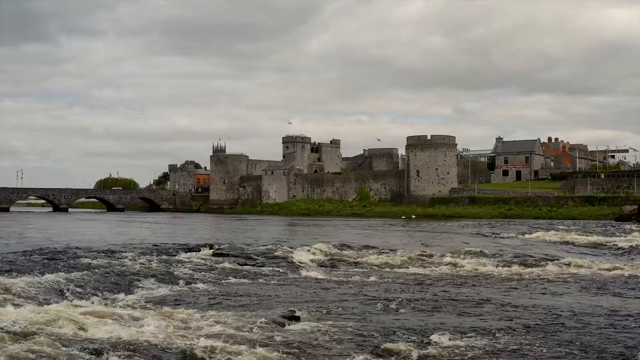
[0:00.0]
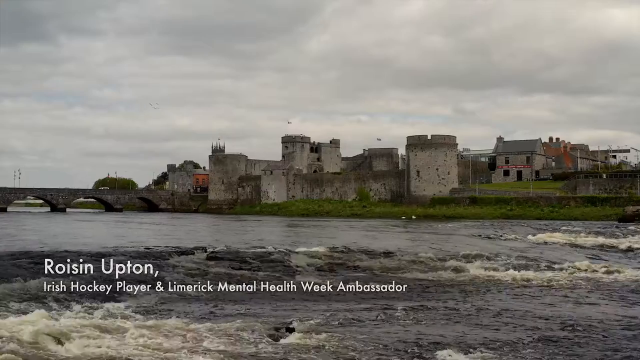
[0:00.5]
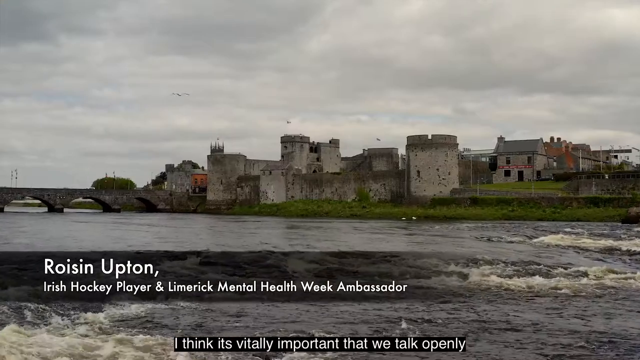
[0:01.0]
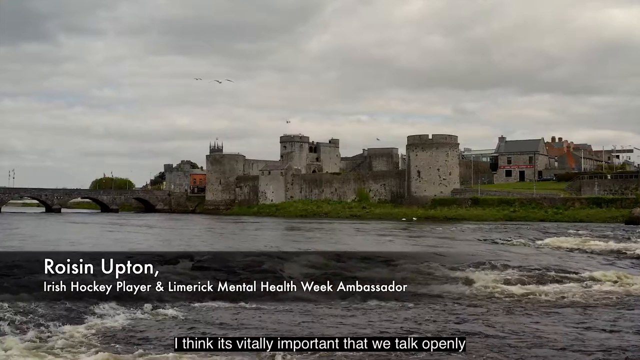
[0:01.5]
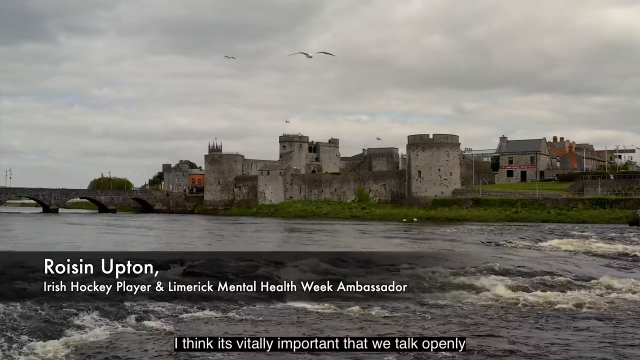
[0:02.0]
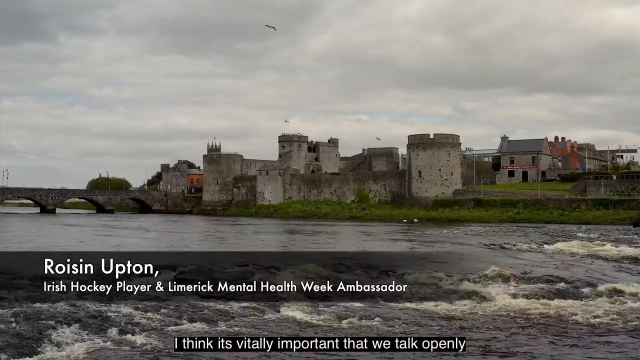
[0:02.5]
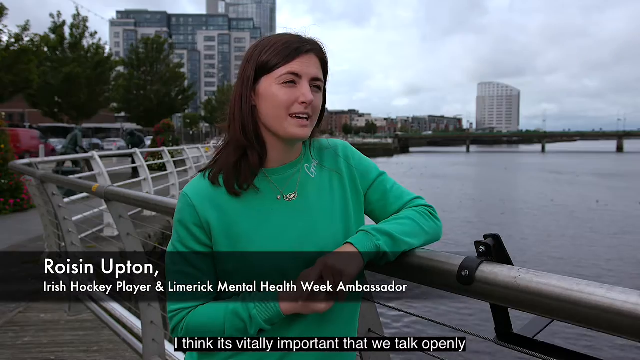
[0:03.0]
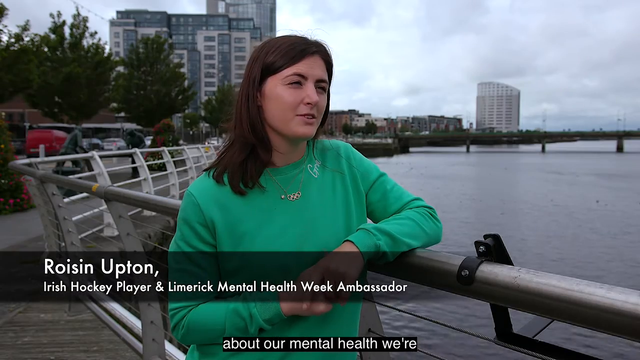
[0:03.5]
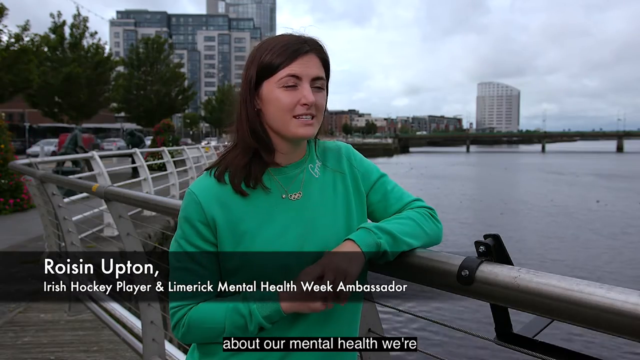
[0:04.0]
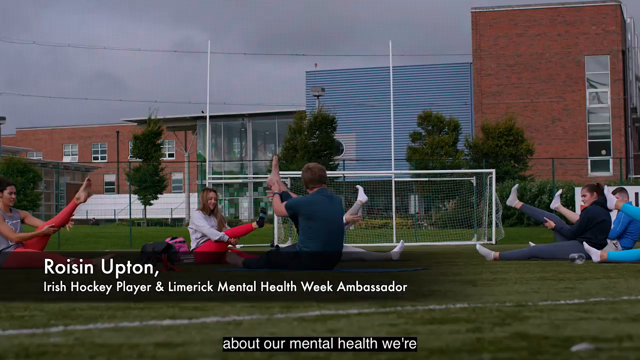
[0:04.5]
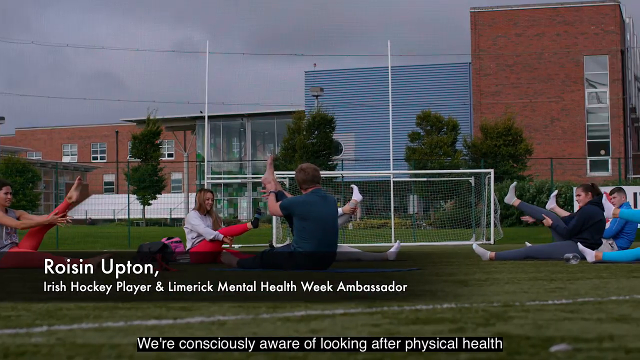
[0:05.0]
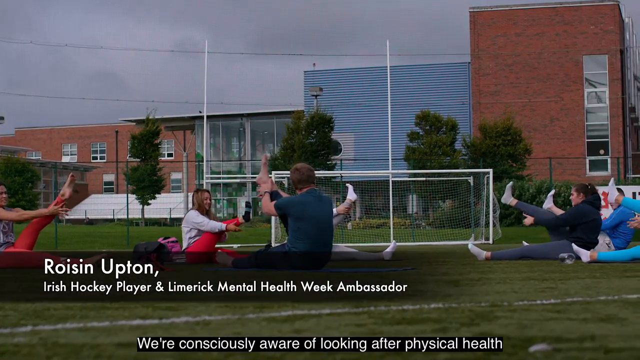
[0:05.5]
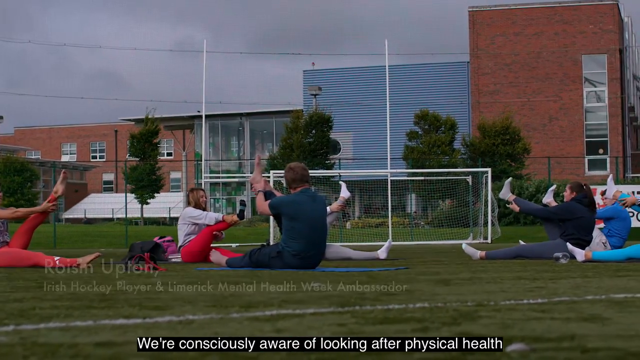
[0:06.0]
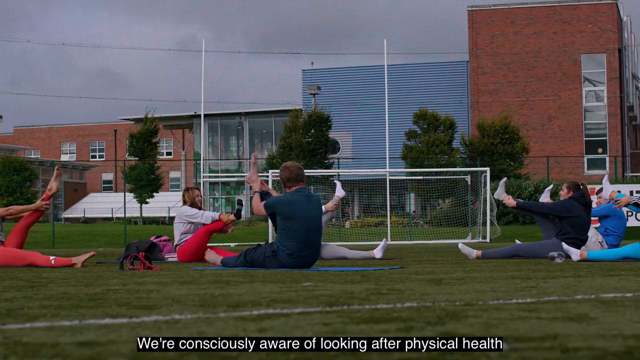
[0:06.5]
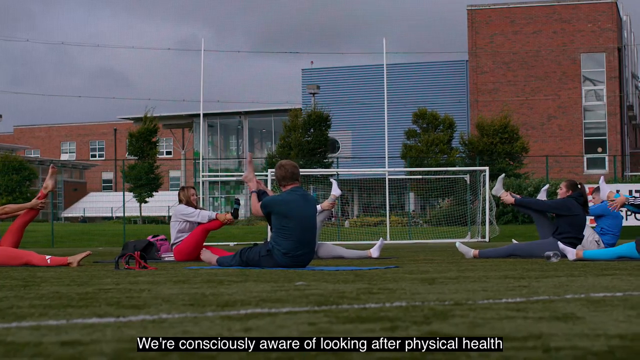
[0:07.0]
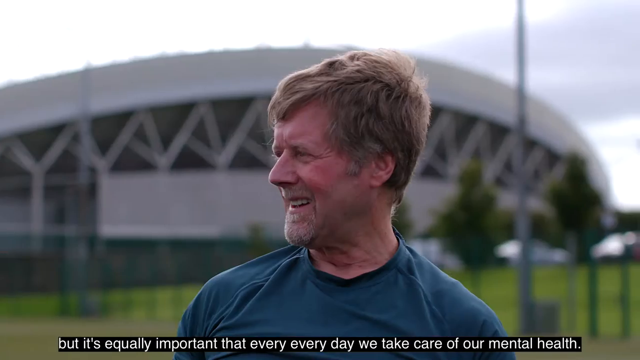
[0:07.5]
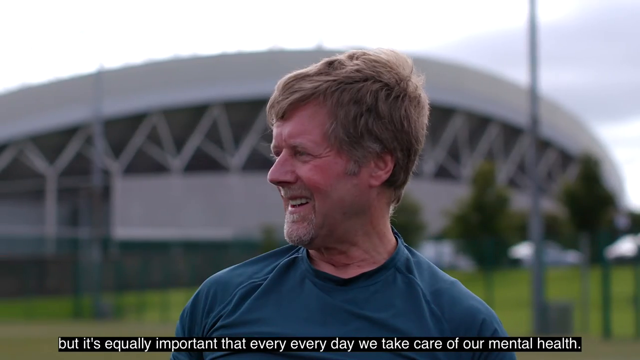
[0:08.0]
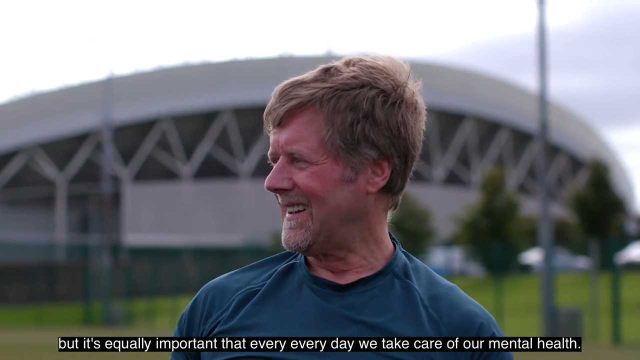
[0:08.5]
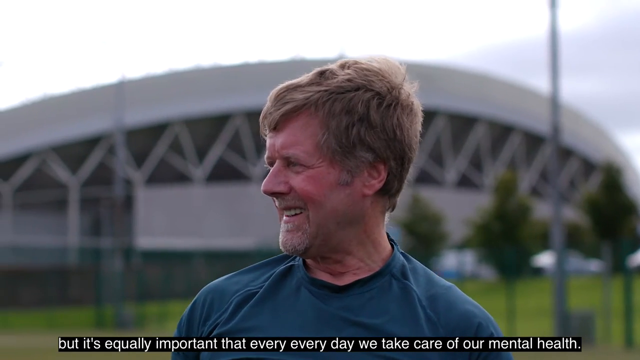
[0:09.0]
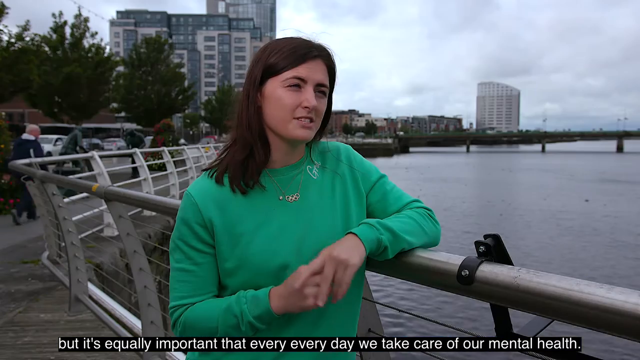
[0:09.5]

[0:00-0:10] An aerial shot advances over water toward an old castle next to a water line, with a bridge going off to the left side. Text at the bottom reads "Roisin Upton, Irish hockey player and Limerick mental health week ambassador." The camera advances or zooms in toward the castle for a moment. After a cut, a woman, likely the person named at the bottom, stands next to and leans on a rail in an urban area. The rail separates the city from the river, with the river visible on the right and the city on the left. She speaks to the camera, being interviewed. Another cut shows people doing stretching exercises in what appears to be a soccer field; they sit on the ground and lift up their legs. A further cut shows a close-up view of one of the people.